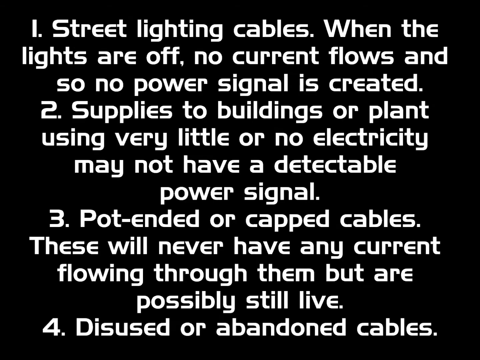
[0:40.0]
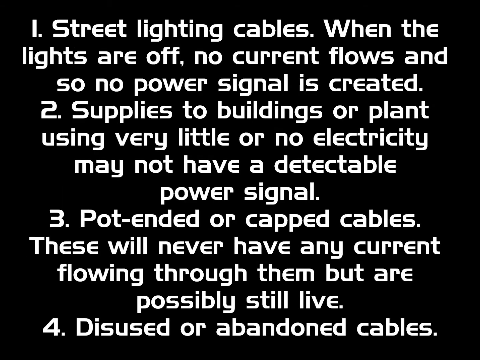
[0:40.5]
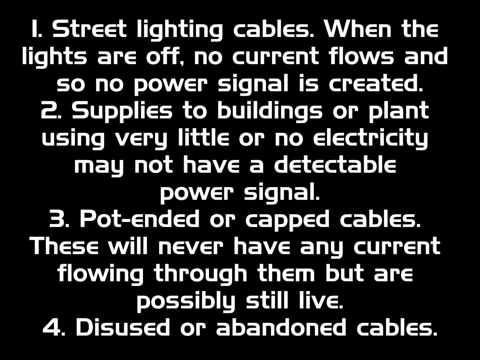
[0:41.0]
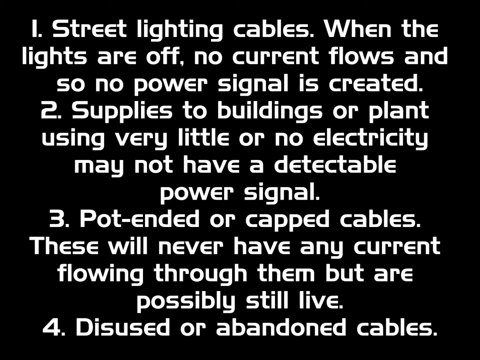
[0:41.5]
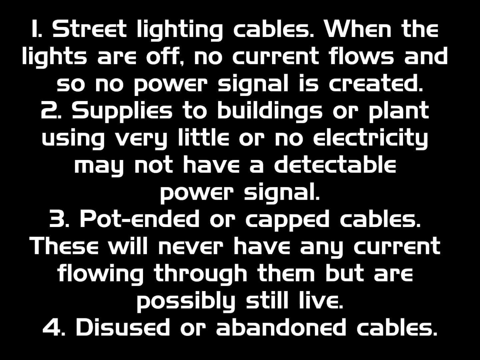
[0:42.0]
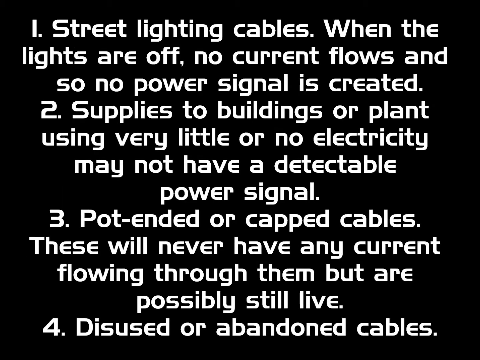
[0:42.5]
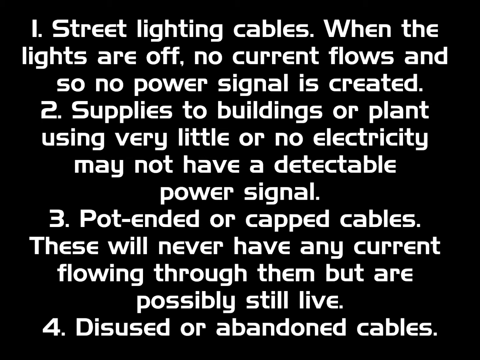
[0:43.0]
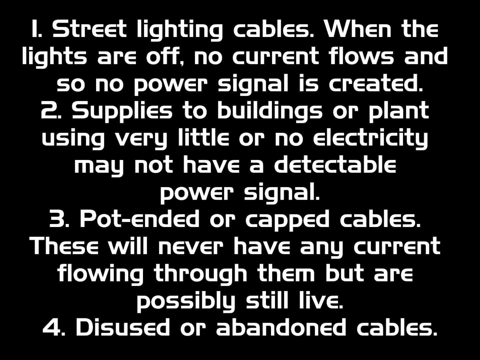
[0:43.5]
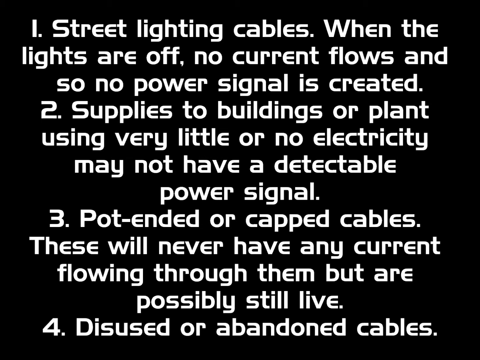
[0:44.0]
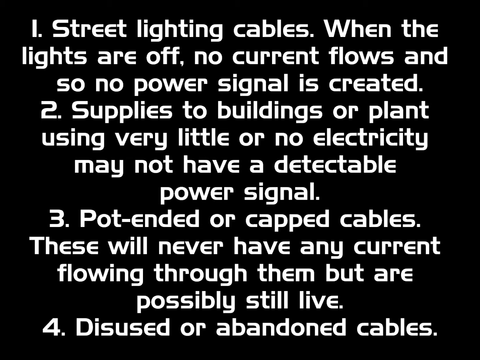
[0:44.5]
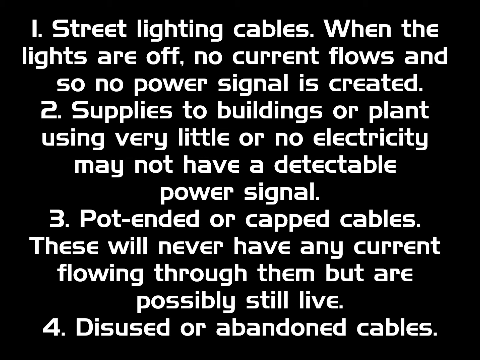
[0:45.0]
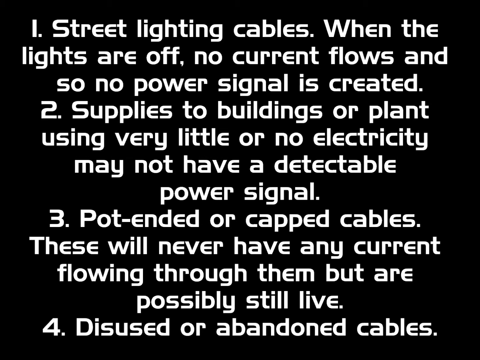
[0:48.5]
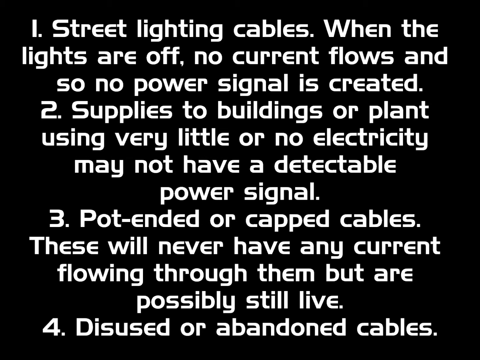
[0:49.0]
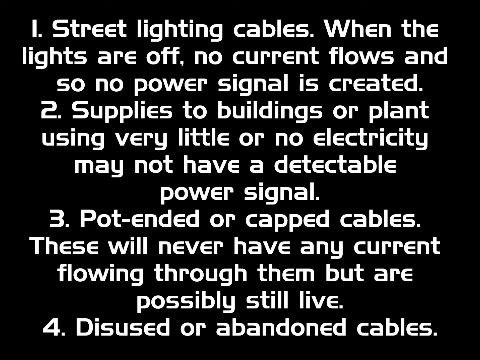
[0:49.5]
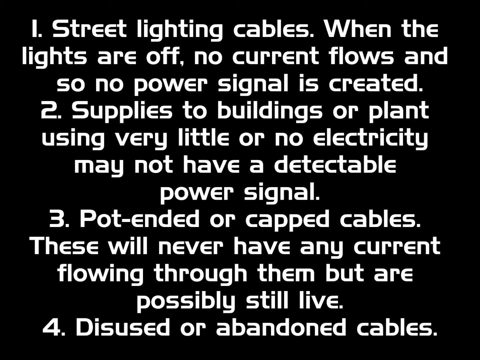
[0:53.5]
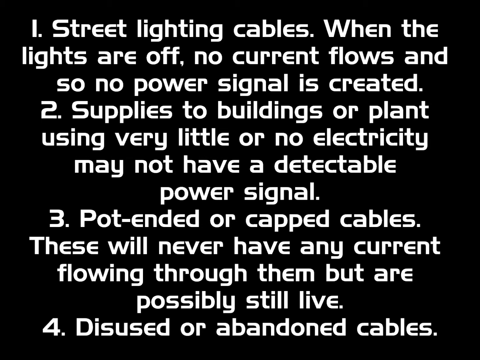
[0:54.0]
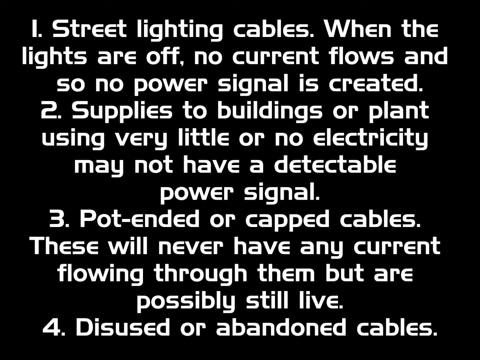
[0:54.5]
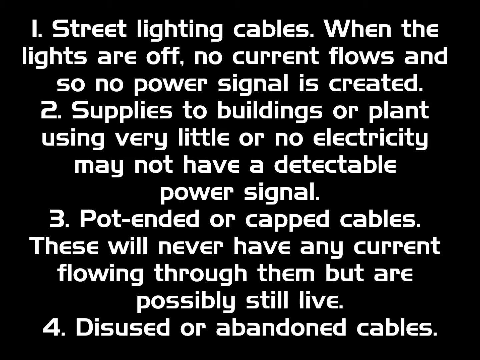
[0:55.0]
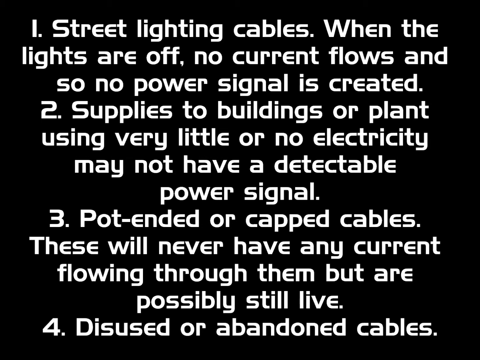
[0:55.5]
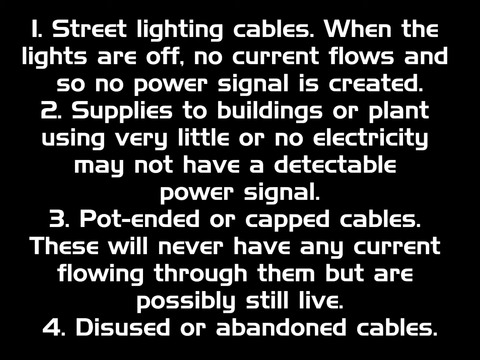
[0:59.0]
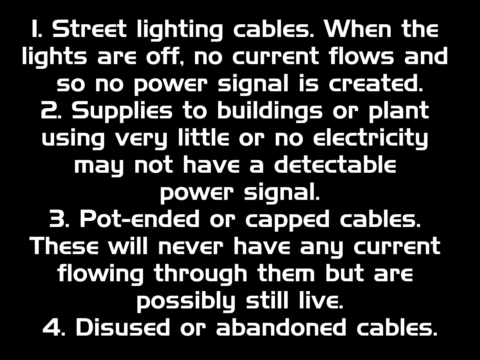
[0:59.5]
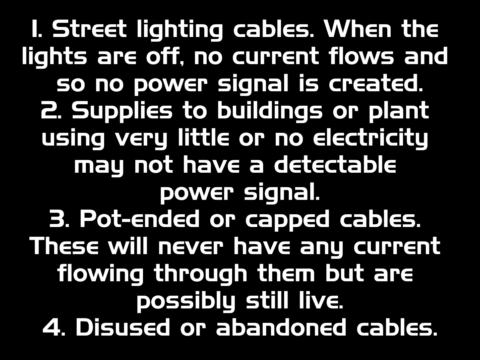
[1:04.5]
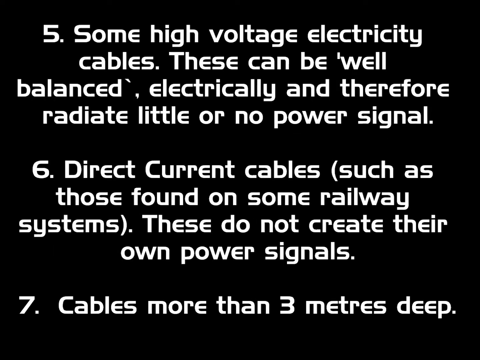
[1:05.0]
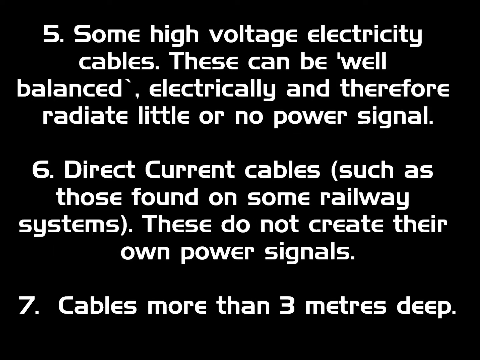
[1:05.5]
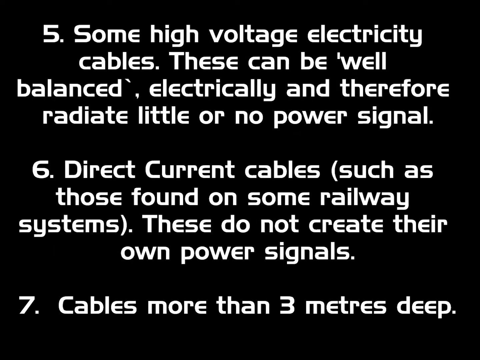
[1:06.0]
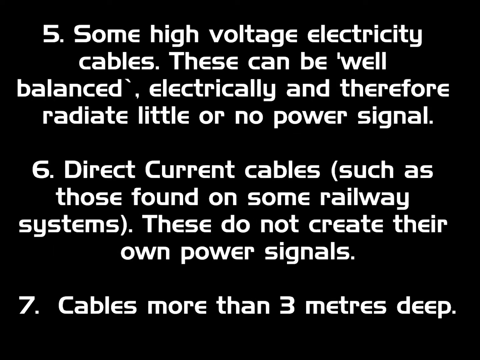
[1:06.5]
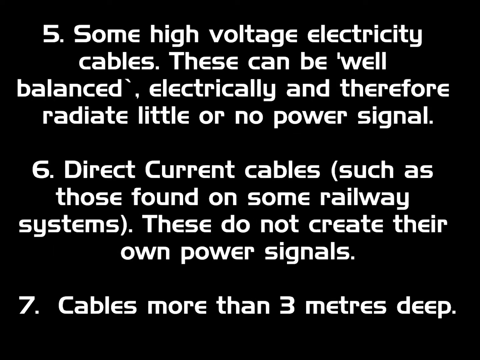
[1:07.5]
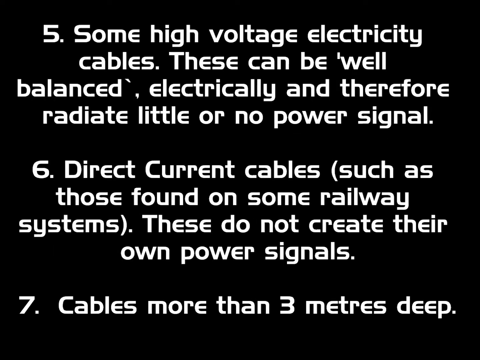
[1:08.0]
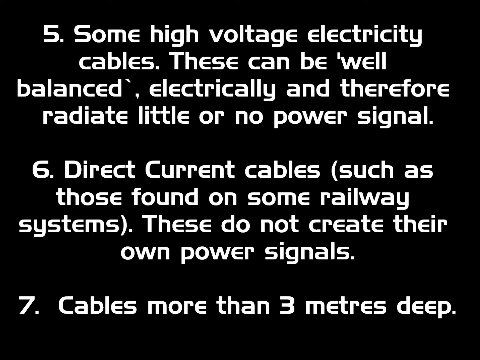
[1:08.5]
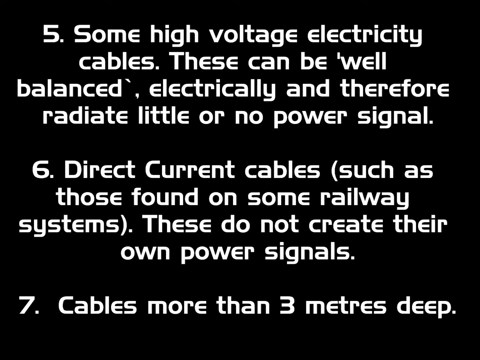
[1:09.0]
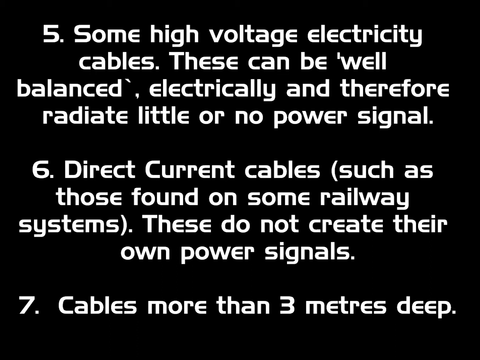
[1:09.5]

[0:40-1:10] The text begins with what is not always in power mode, starting with street lighting cables: "when the lights are off, no current flows and so no power signal is created." Number two reads "supplies to buildings or plant using very little or no electricity may not have a detectable power signal." Number three reads "pot ended or capped cables. These will never have any current flowing through them but are possibly still live." Number four reads "disused or abandoned cables." The text moves on to the next section, where number five reads "some high voltage electricity cables. These can be well balanced electrically and therefore radiate little or no power signal." Number six reads "direct current cables such as those found on some railway systems. These do not create their own power signals," and seven reads "cables more than three meters deep."